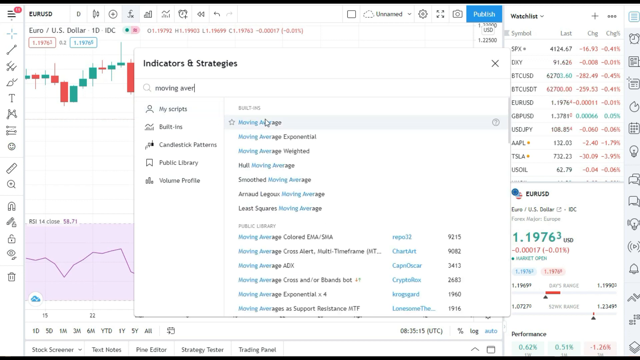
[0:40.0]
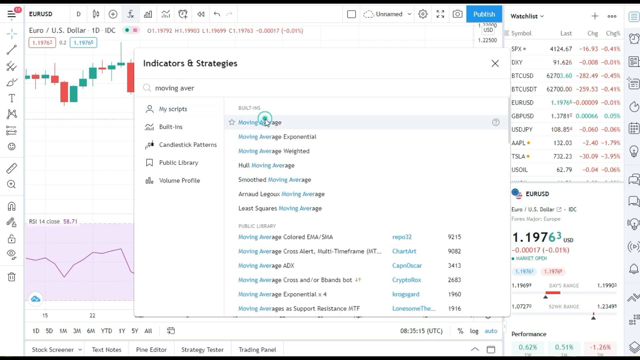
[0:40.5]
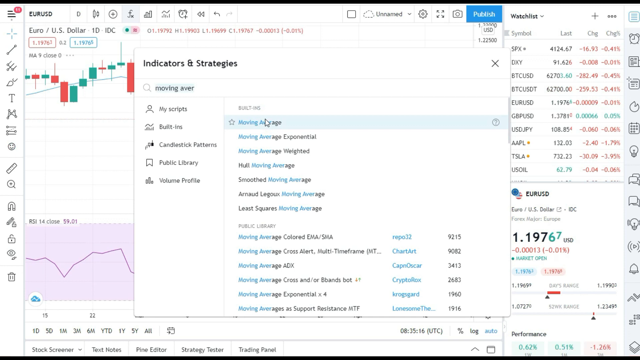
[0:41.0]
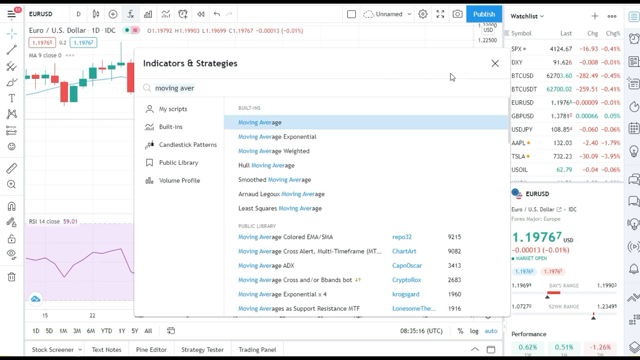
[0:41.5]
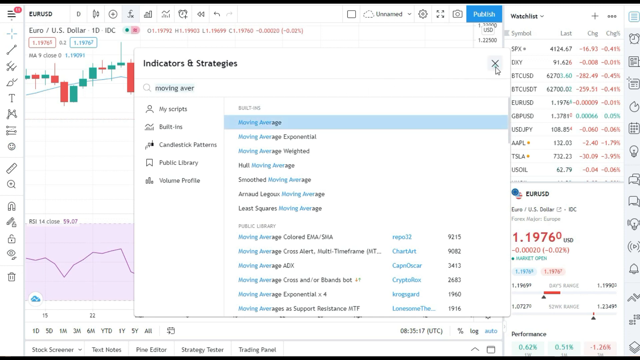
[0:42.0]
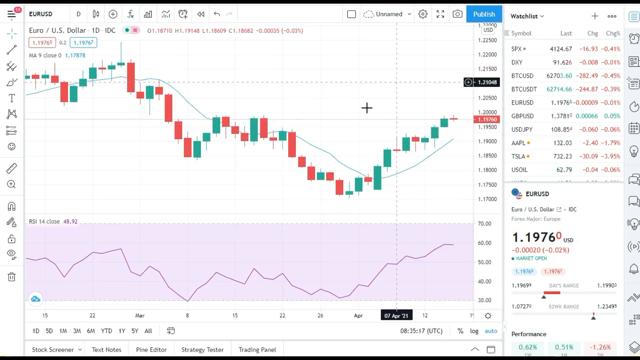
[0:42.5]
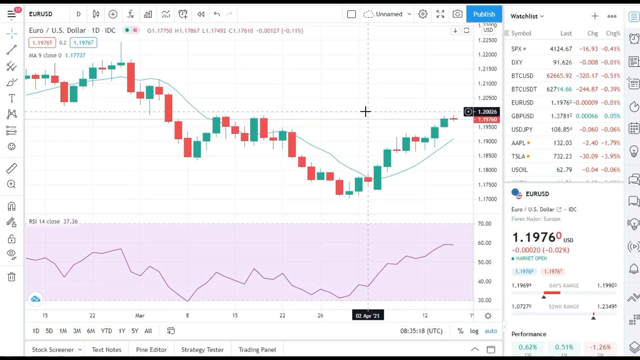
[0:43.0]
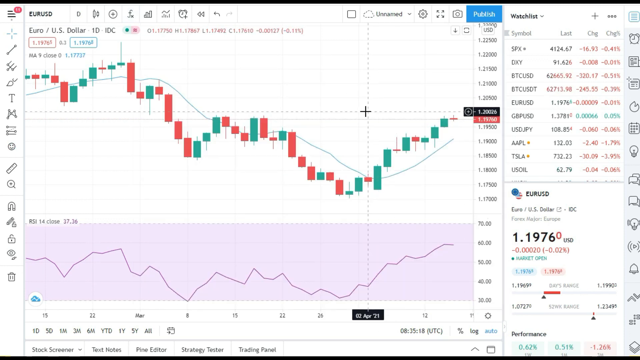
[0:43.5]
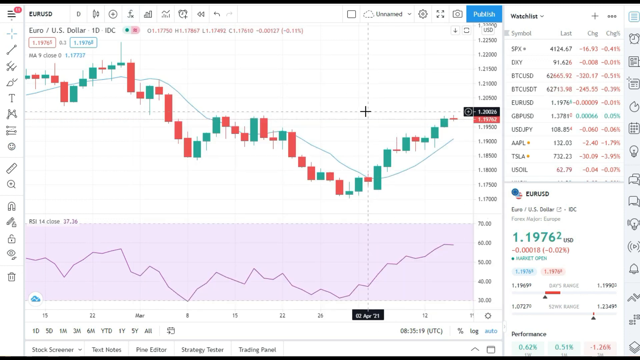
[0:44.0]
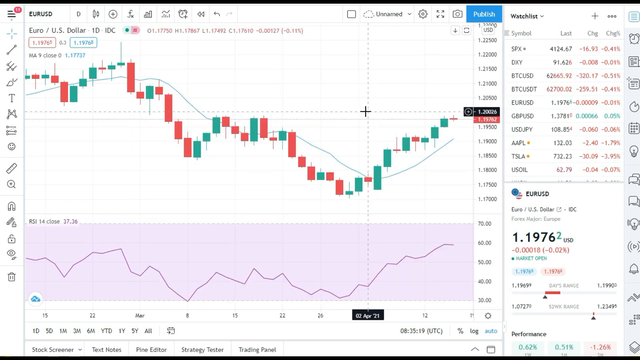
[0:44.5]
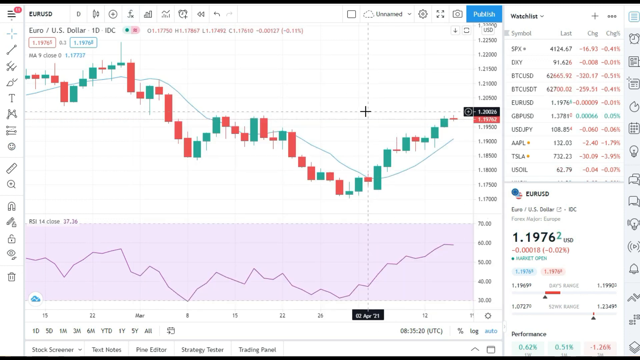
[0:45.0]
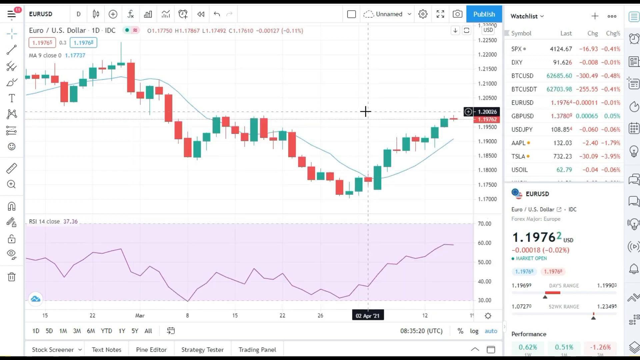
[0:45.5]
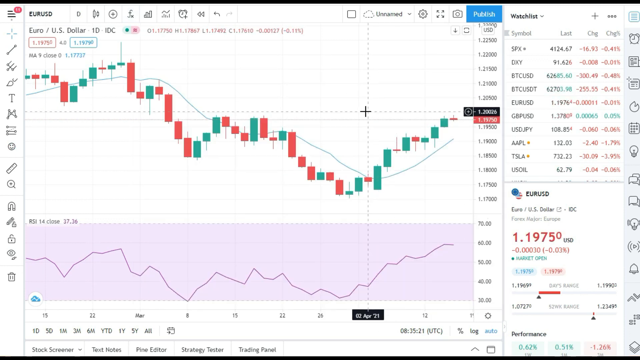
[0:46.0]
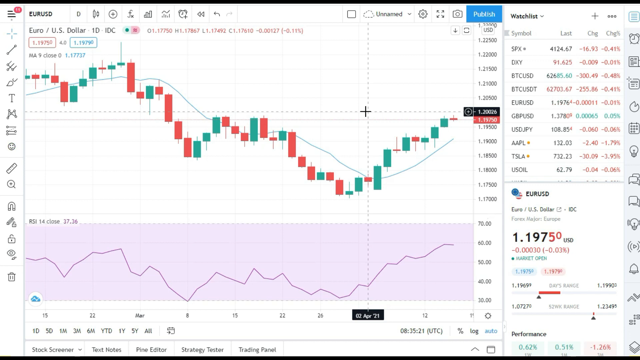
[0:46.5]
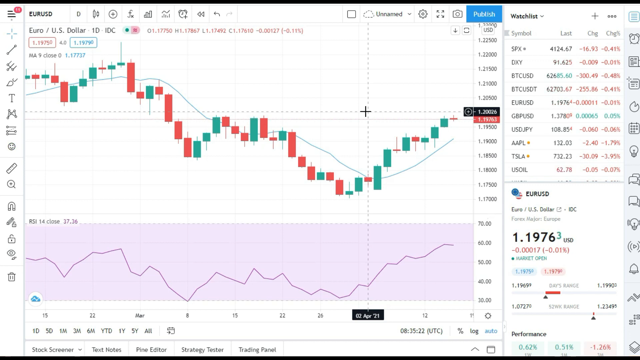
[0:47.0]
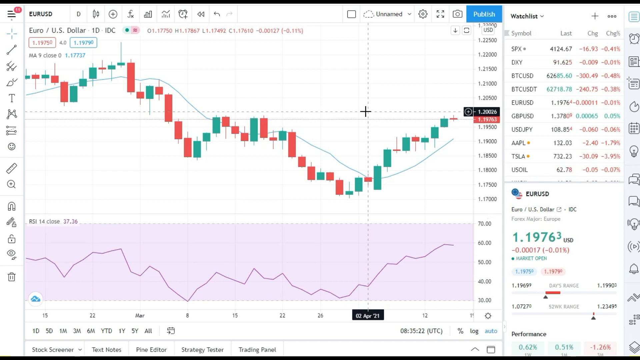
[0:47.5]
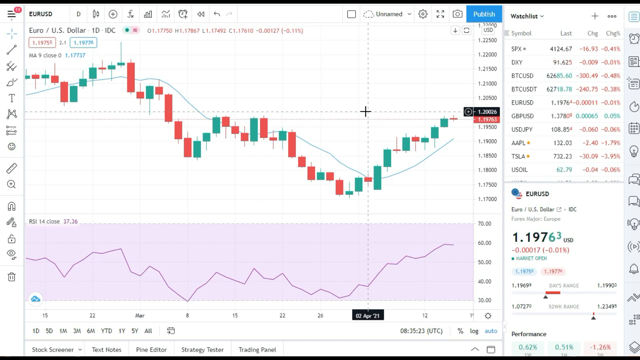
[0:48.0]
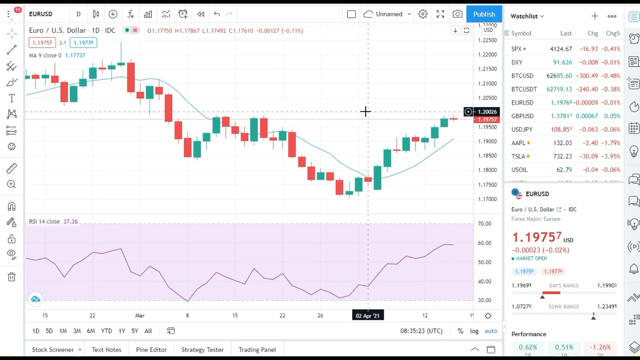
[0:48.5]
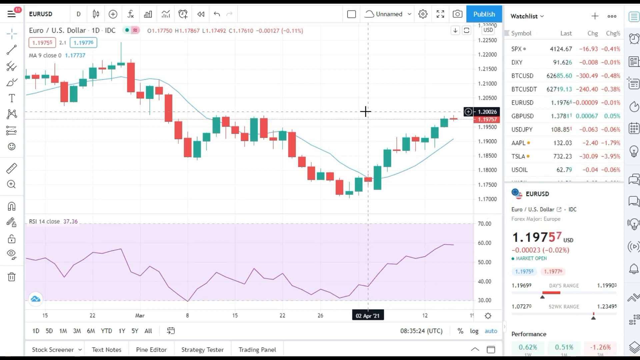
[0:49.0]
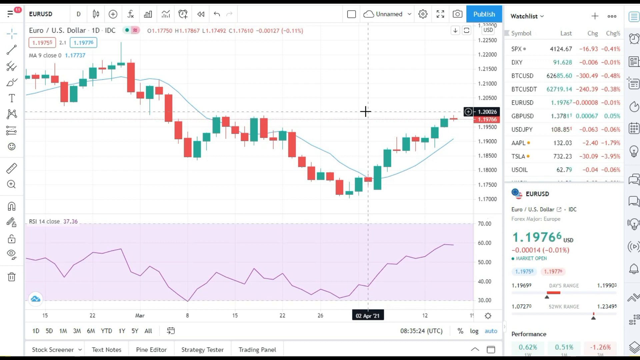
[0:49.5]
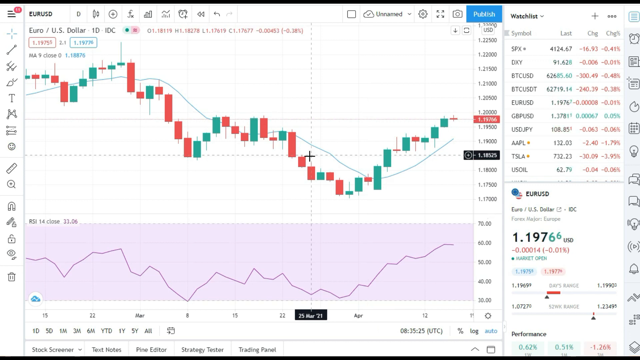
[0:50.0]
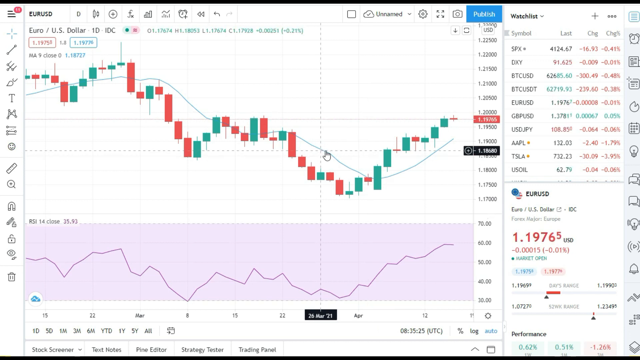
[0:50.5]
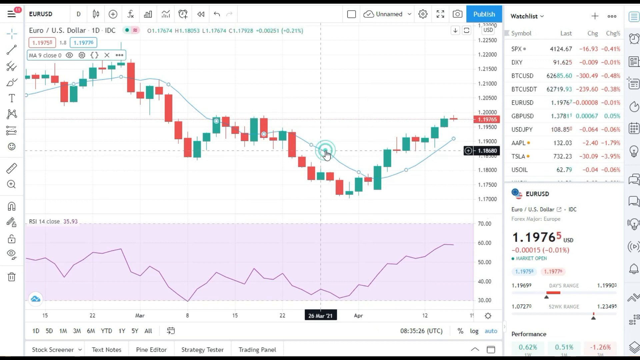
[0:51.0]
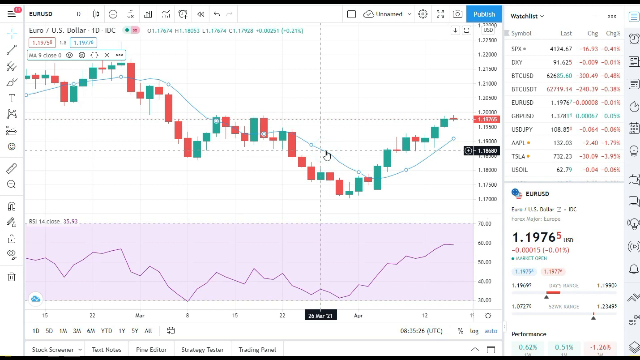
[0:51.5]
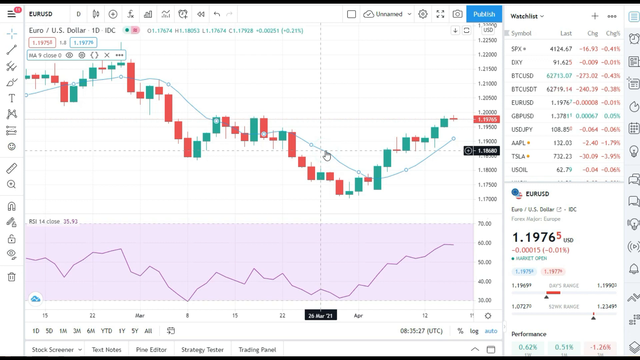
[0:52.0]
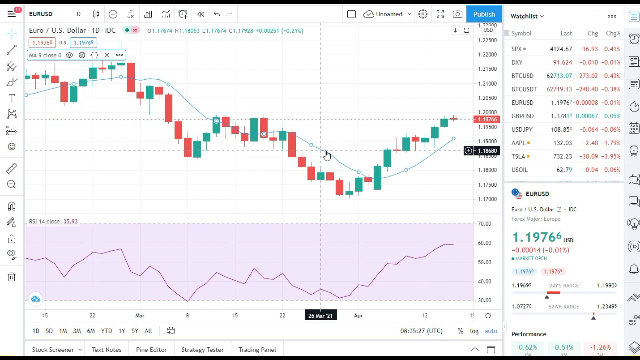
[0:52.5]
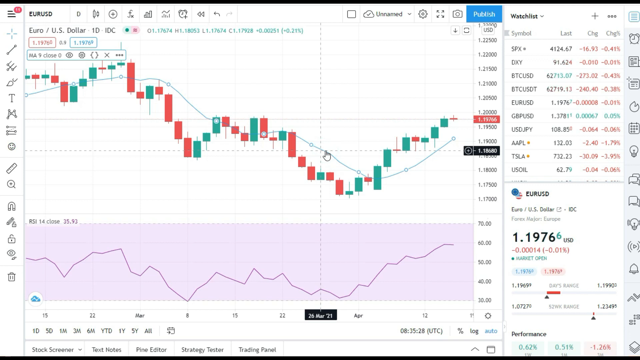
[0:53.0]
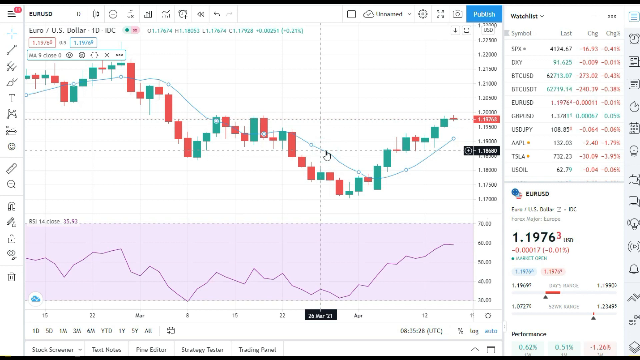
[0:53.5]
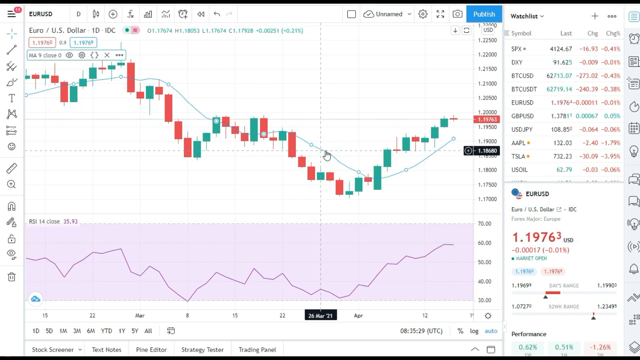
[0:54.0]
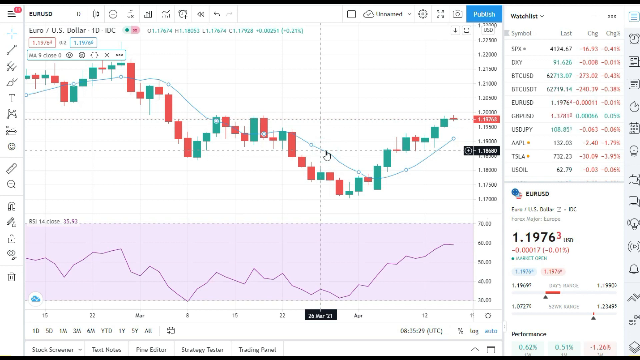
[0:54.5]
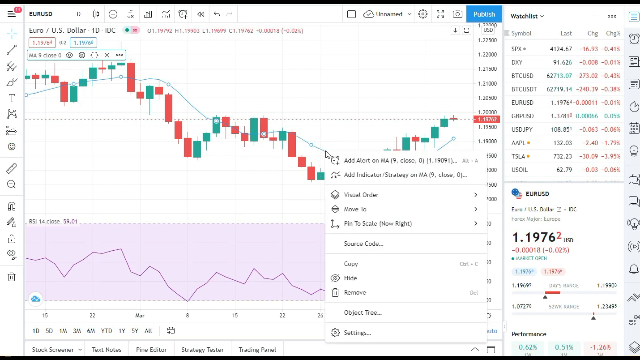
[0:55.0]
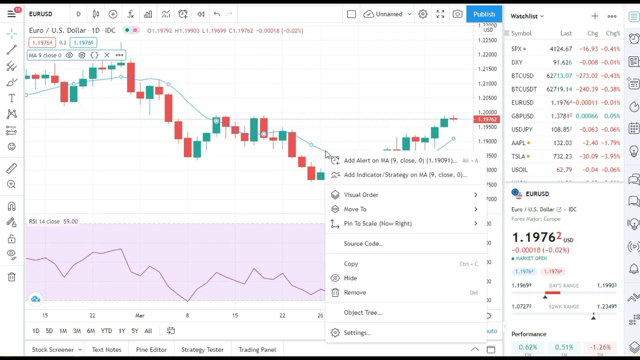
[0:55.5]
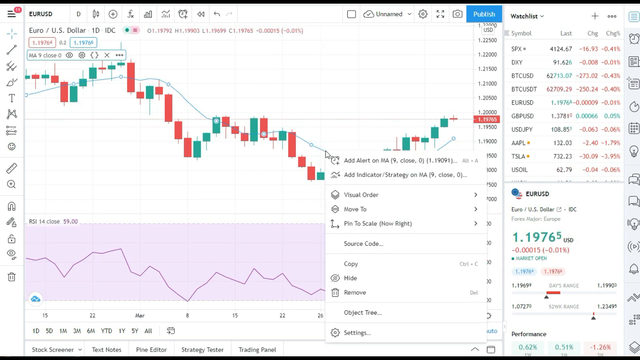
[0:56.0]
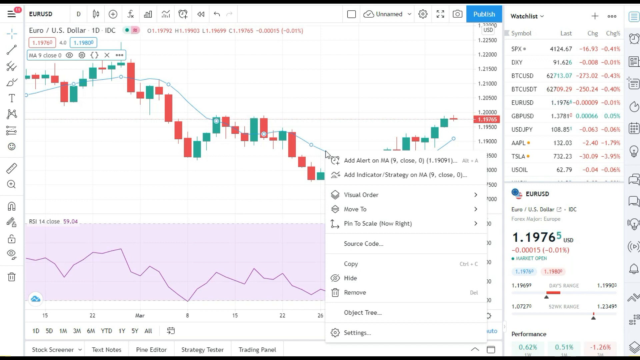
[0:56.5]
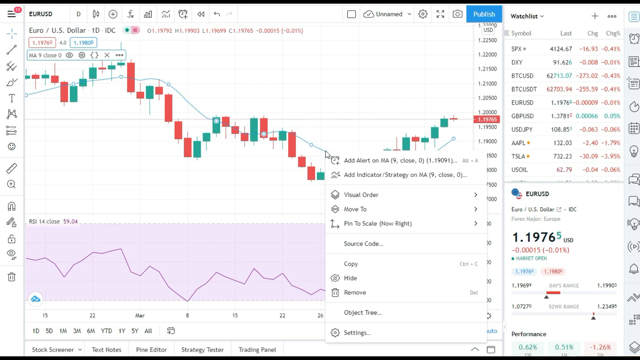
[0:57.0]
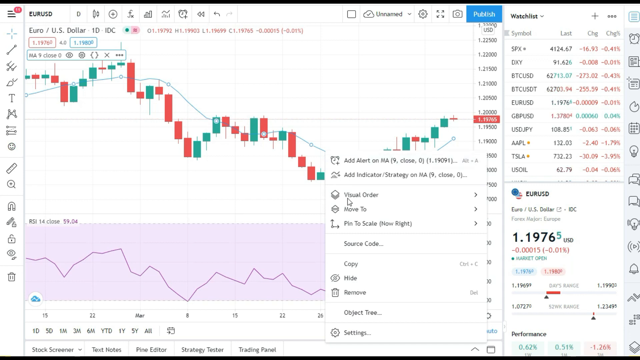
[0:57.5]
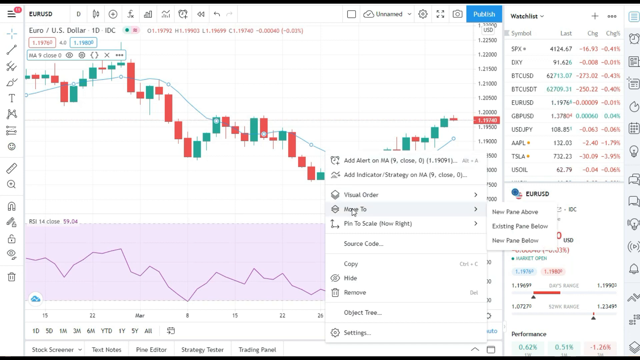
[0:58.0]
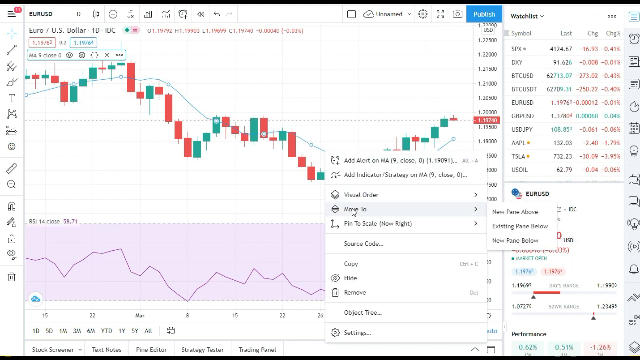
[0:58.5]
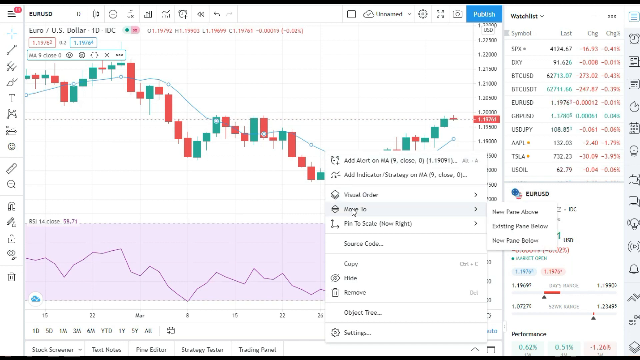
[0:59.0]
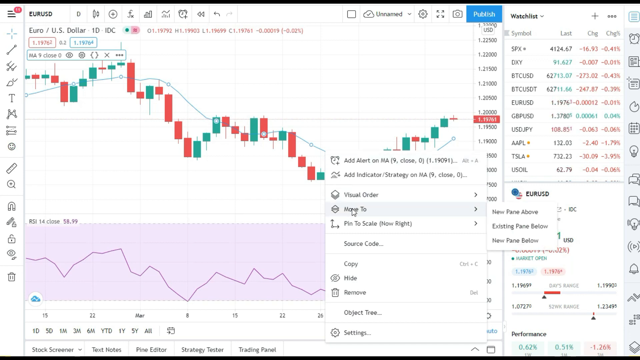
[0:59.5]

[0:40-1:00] The euro is traded against the USD, and the graphs and prices fluctuate from 1.1976 to 1.1973. There are options for visual order, moving average, my scripts, buildings, candlestick patterns, public library and volume profile. A graph on the bottom shows the fluctuating characteristics of the currencies. Listed pairs include BTC against USD, euro against USD, Great Britain pound against the US dollar, and US dollar against the Japanese yen.